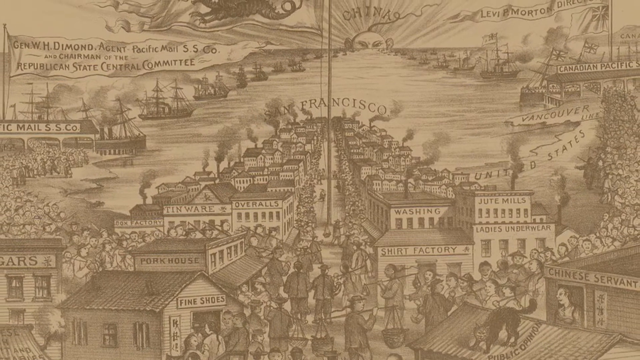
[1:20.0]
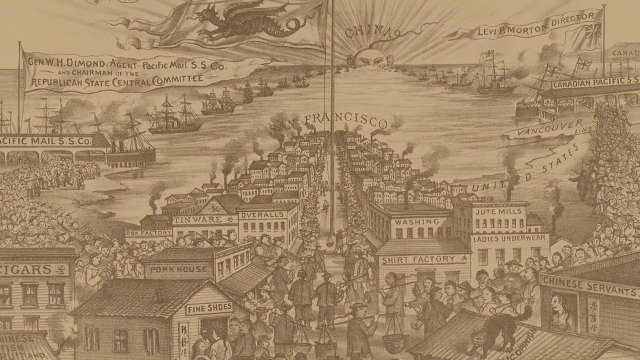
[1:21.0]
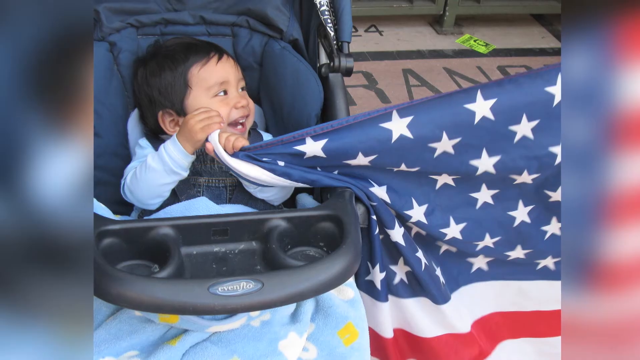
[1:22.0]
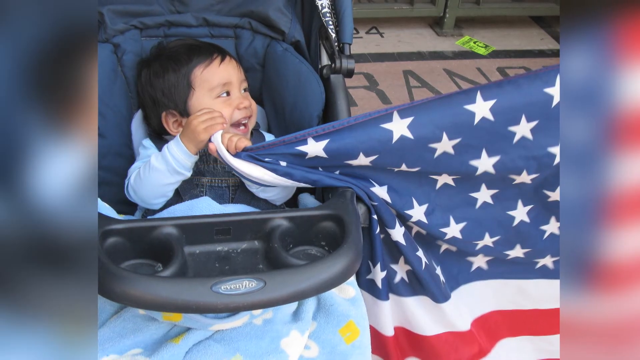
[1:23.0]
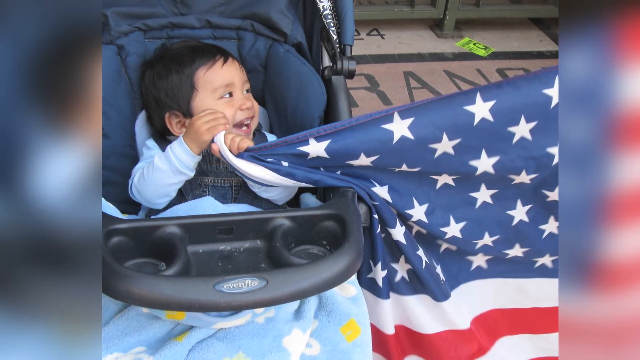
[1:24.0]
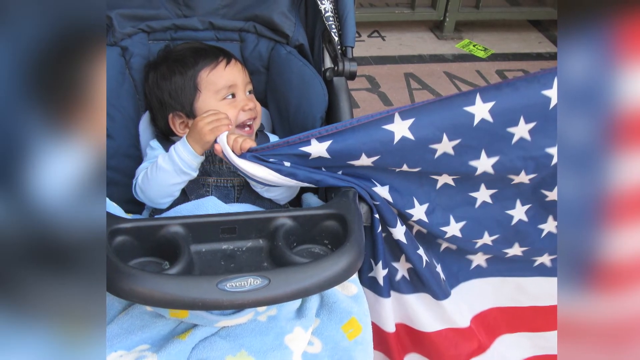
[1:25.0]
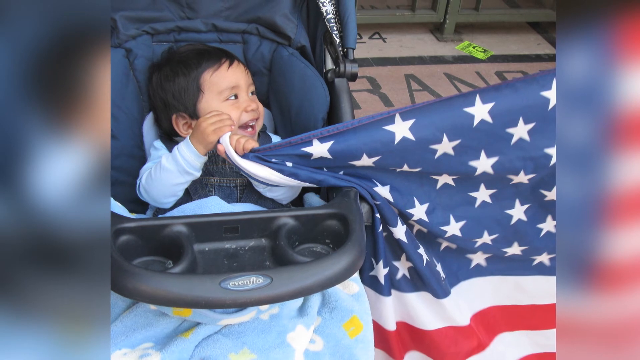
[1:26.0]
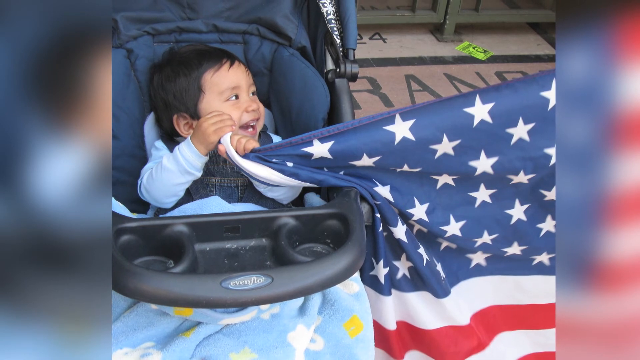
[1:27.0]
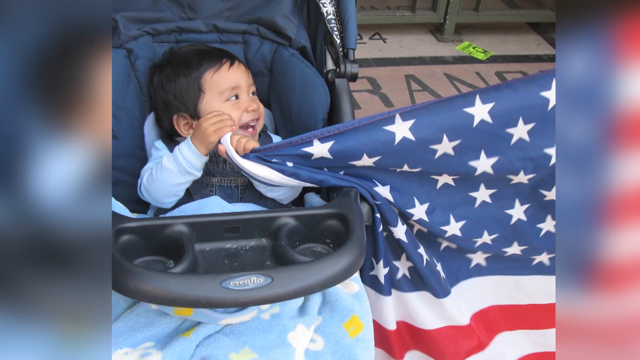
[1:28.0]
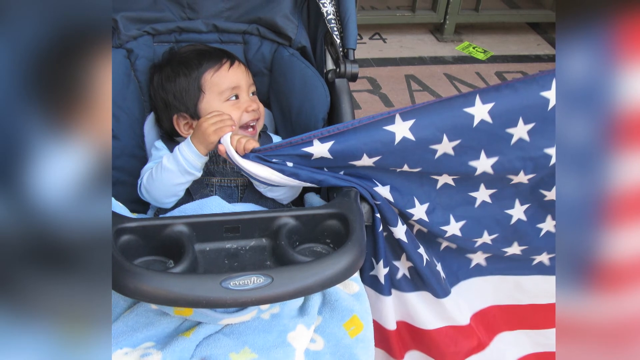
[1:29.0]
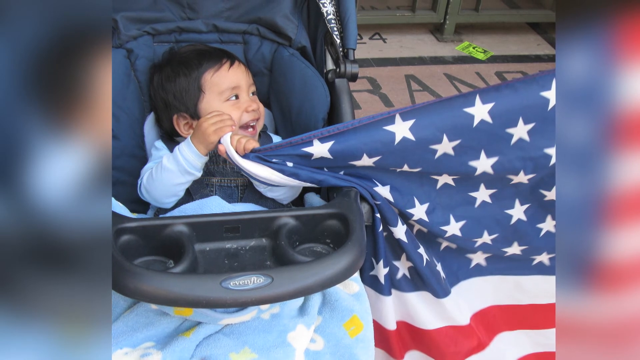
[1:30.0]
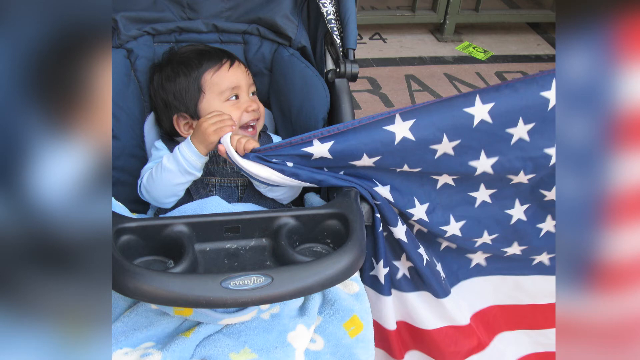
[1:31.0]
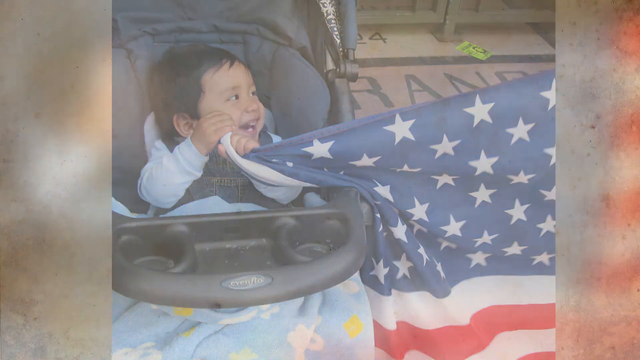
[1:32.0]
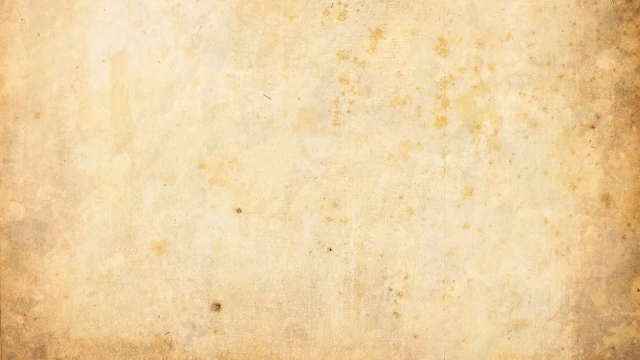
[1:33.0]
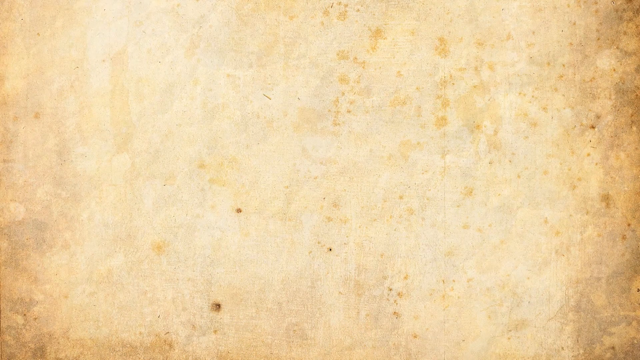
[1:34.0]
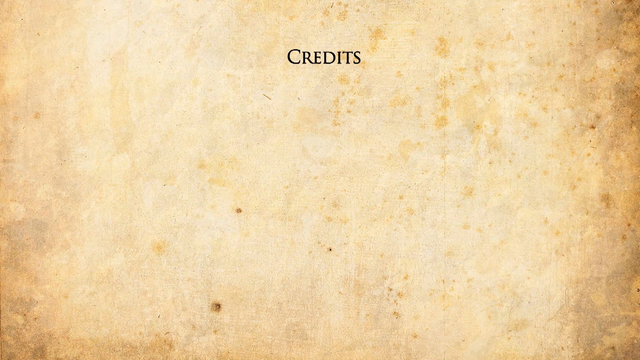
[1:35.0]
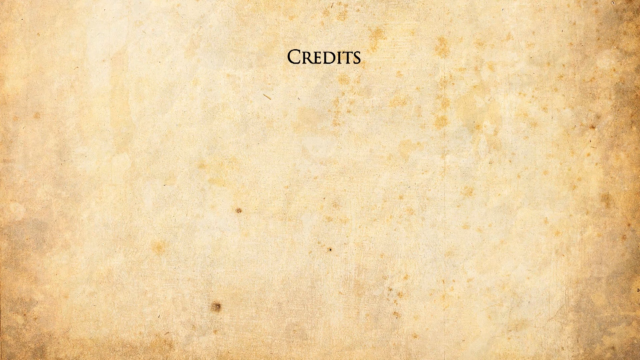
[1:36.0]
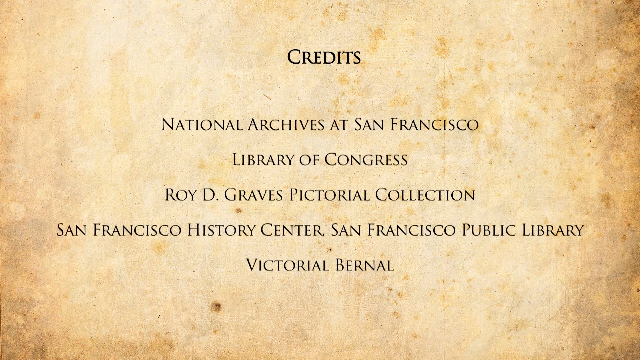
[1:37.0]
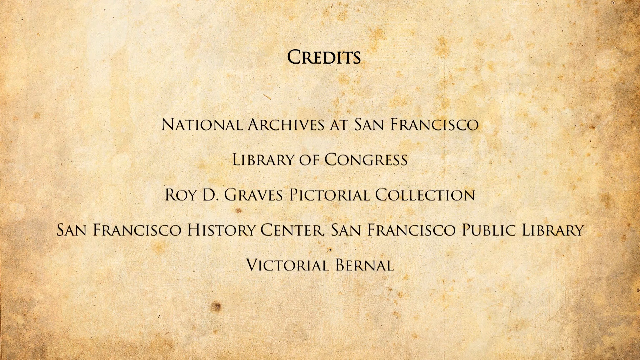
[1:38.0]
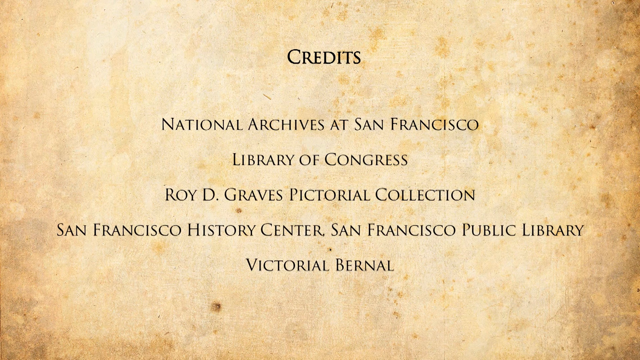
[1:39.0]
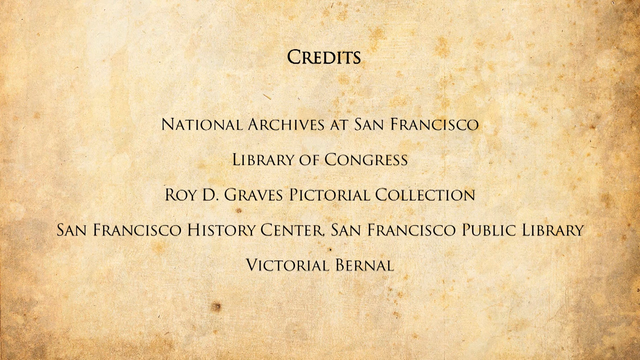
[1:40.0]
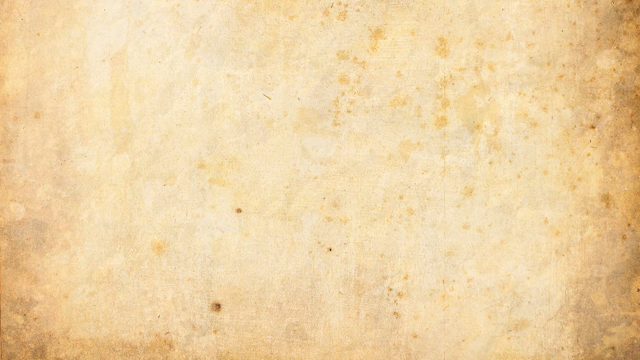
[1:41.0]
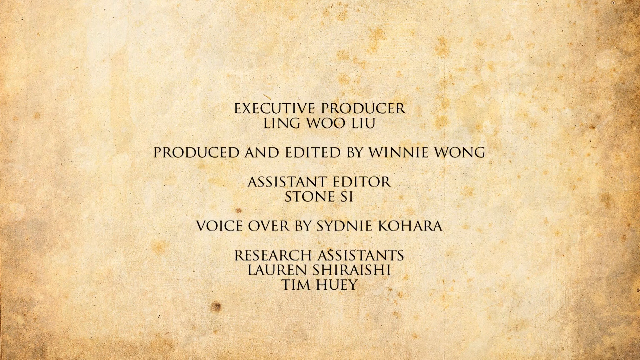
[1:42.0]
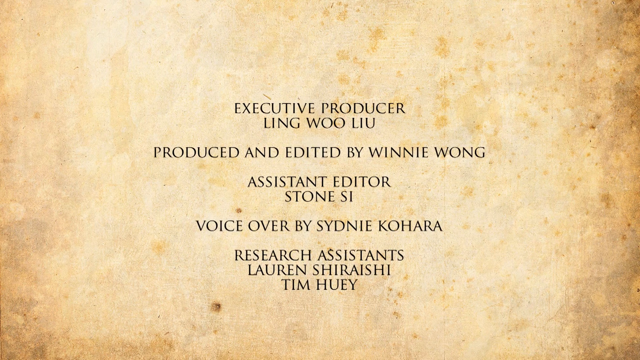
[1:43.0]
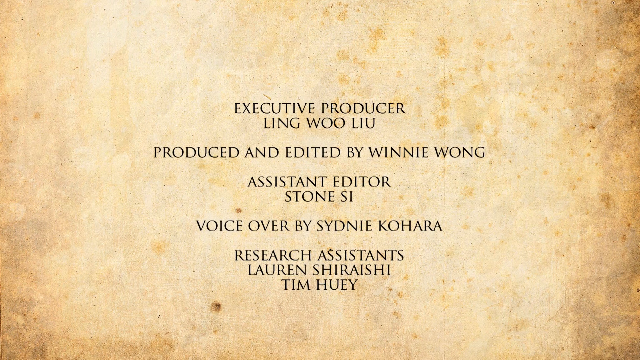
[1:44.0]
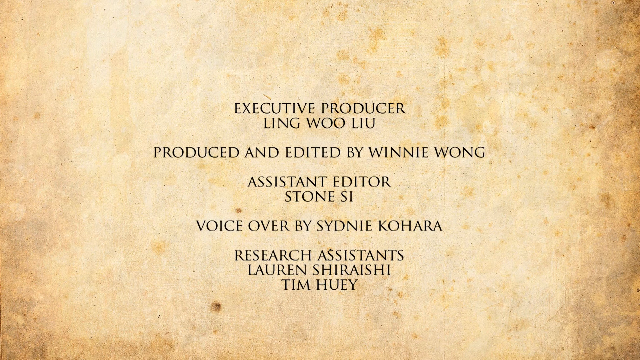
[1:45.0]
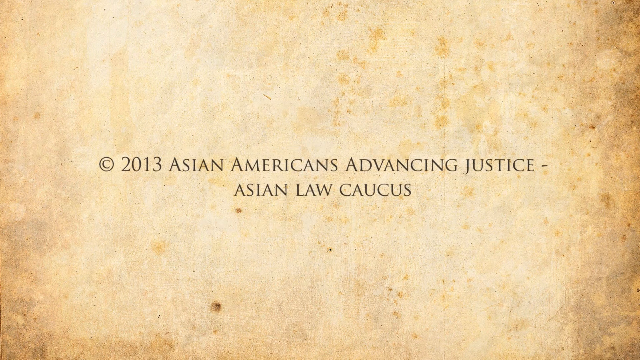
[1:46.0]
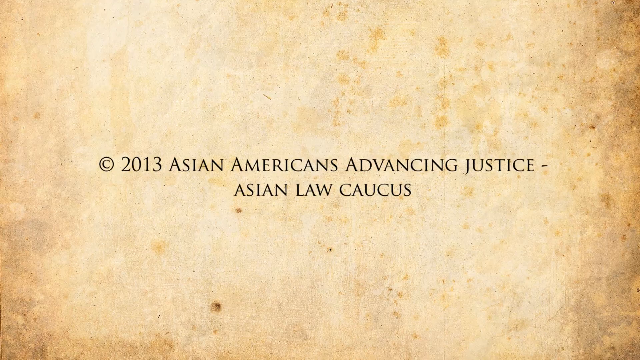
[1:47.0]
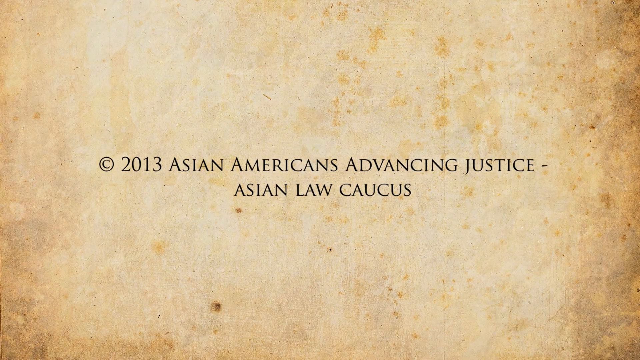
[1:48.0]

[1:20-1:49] An illustration or sketch of the city of San Francisco shows buildings with all kinds of labels in the center bottom, including "tinware," "overalls," "washing," "jute mills," "shirt factory," "ladies' underwear," "Chinese servant," and "fine shoes." In the center of the very far background is a sun with a Chinese or Asian ponytail and slanted eyes. To the left in the background are a bunch of ships in the ocean, and to the right in the background are more ships in the ocean. On the right, in the middle, are the words "United States," "Vancouver," and "Canadian Pacific." At the left in the very back are the words "Diamond Agent Pacific Mail" and "Republican State Central Committee."